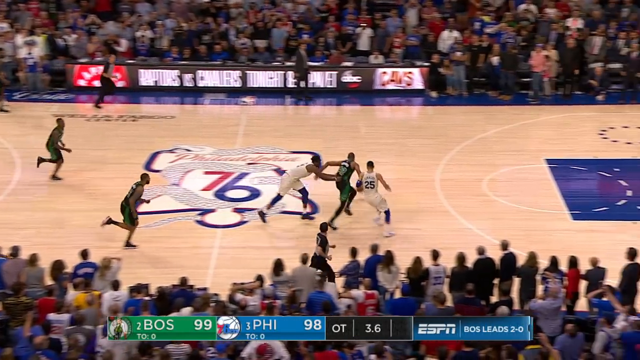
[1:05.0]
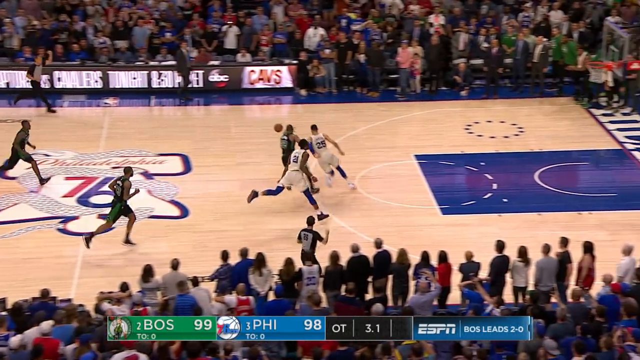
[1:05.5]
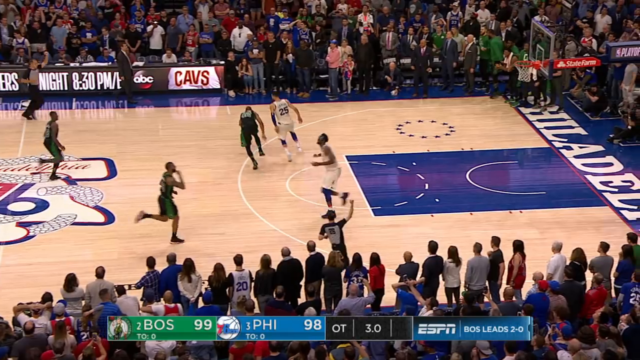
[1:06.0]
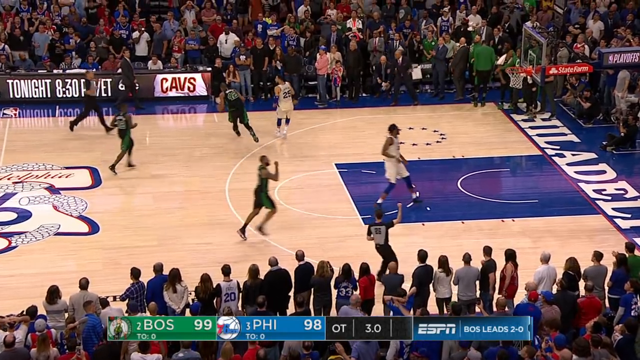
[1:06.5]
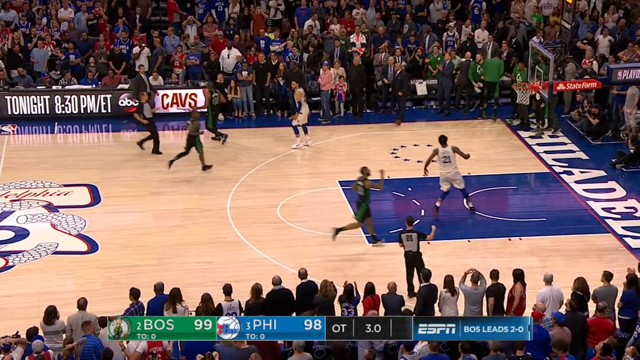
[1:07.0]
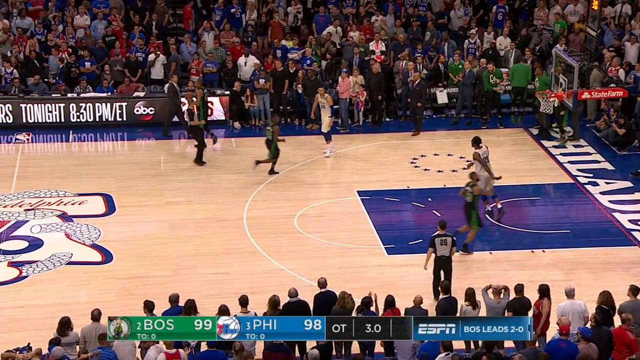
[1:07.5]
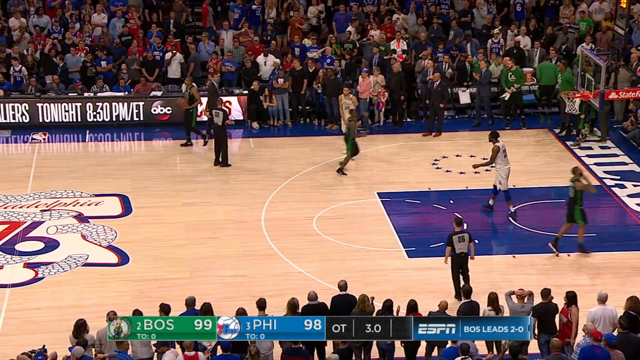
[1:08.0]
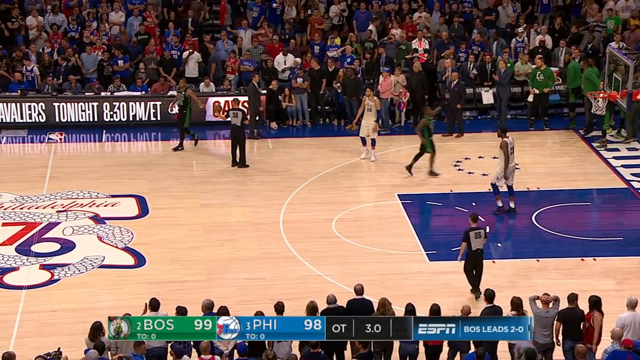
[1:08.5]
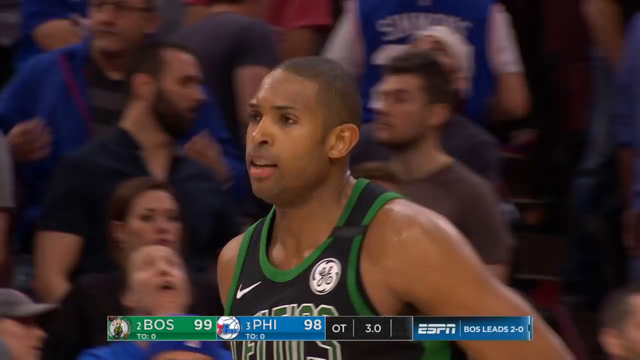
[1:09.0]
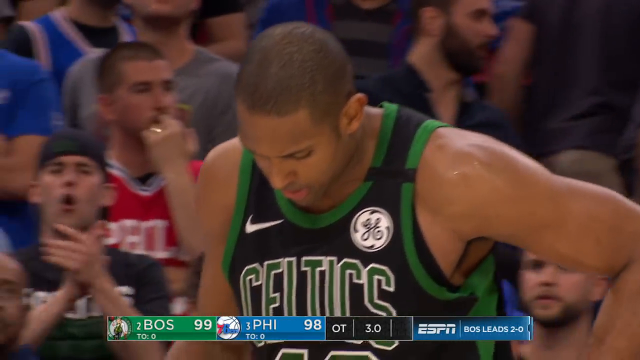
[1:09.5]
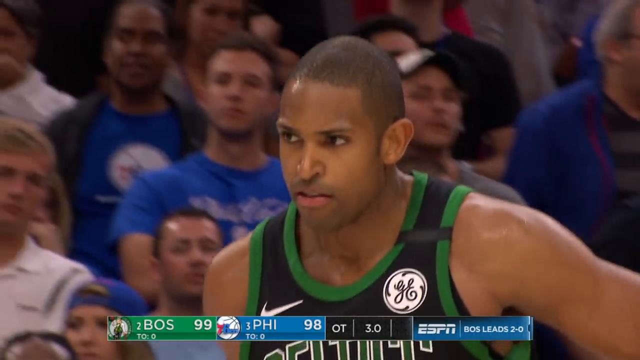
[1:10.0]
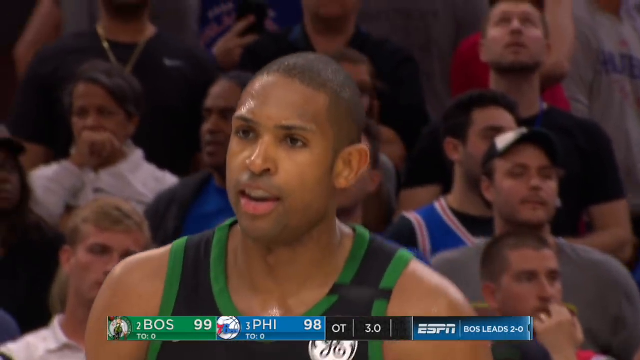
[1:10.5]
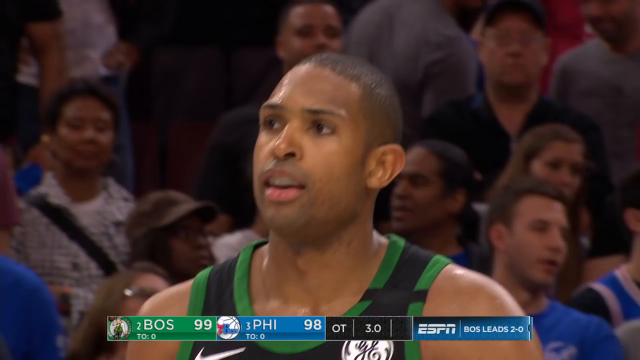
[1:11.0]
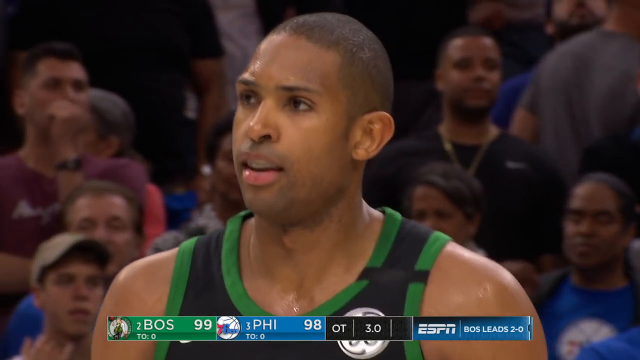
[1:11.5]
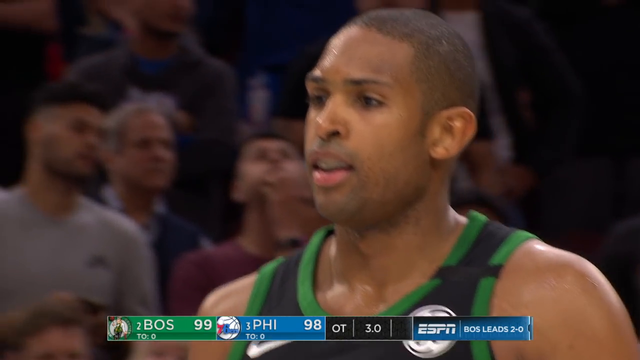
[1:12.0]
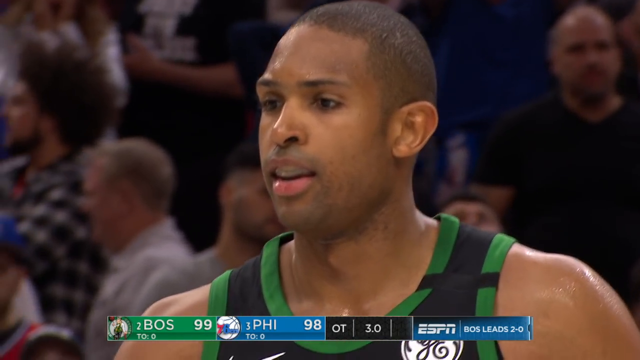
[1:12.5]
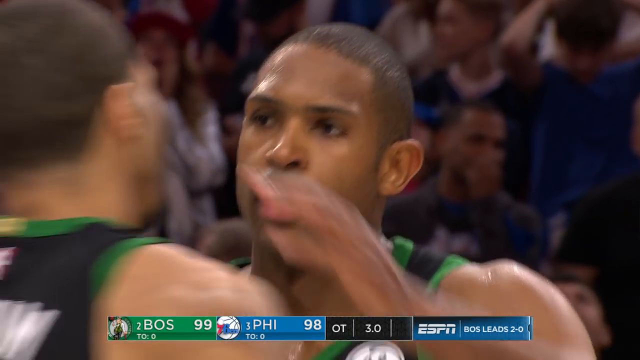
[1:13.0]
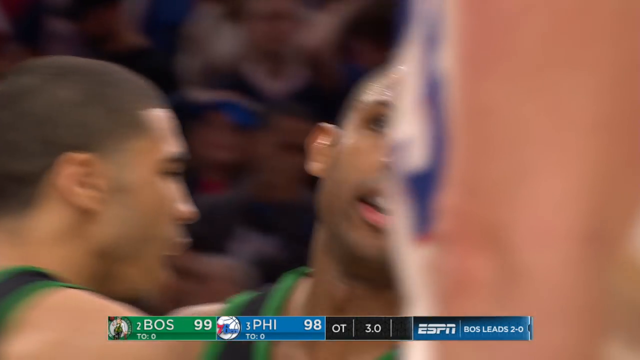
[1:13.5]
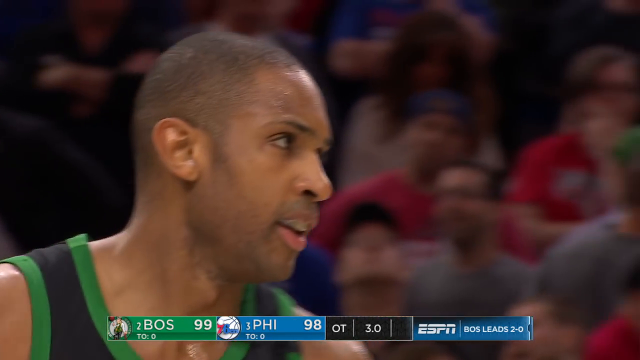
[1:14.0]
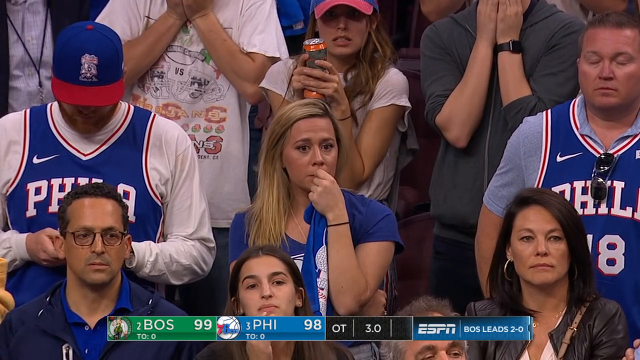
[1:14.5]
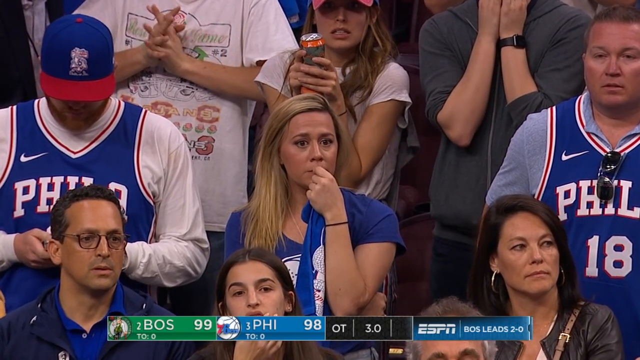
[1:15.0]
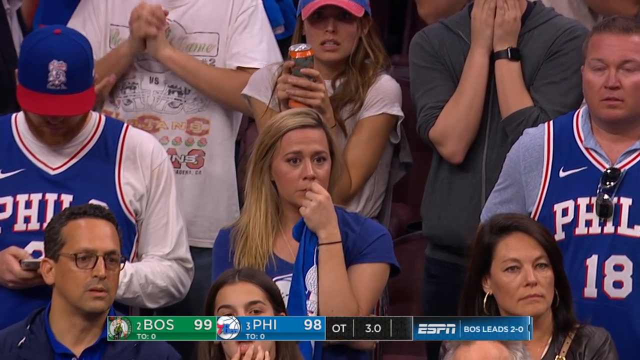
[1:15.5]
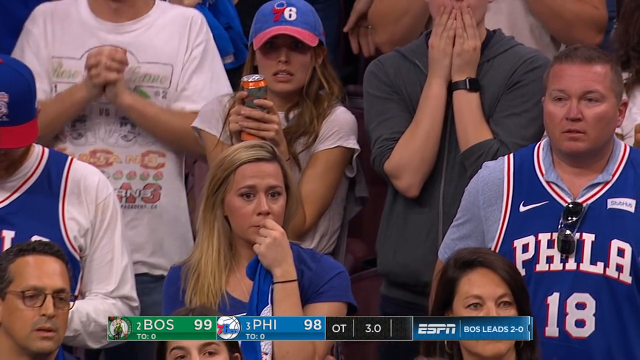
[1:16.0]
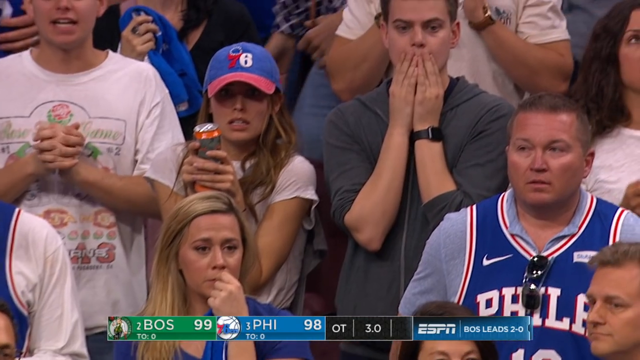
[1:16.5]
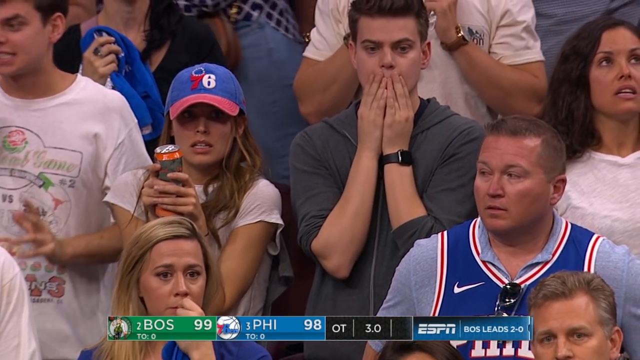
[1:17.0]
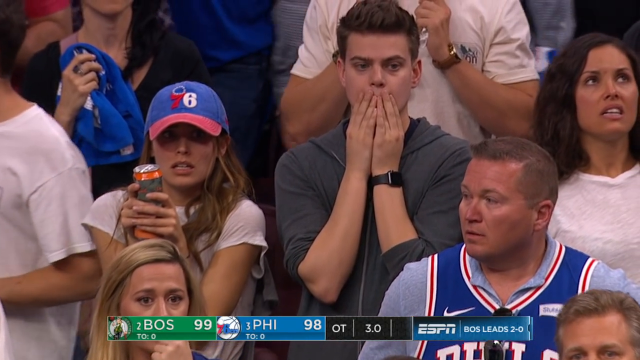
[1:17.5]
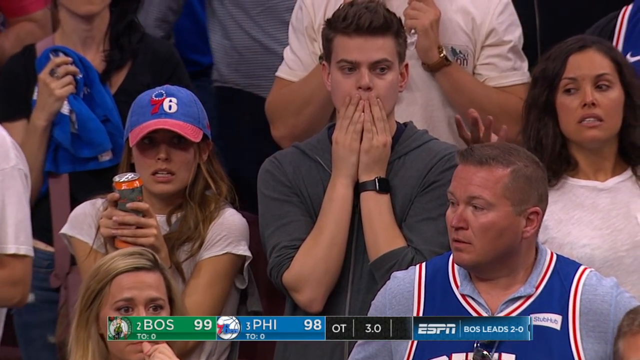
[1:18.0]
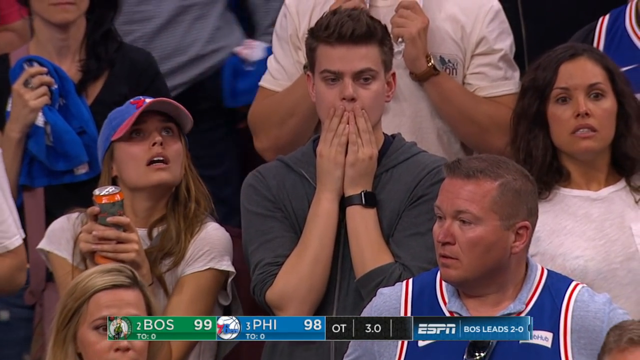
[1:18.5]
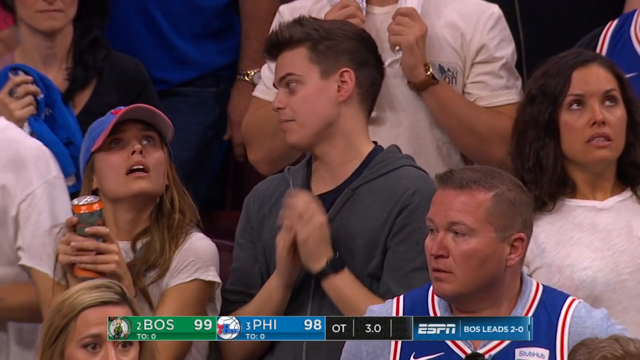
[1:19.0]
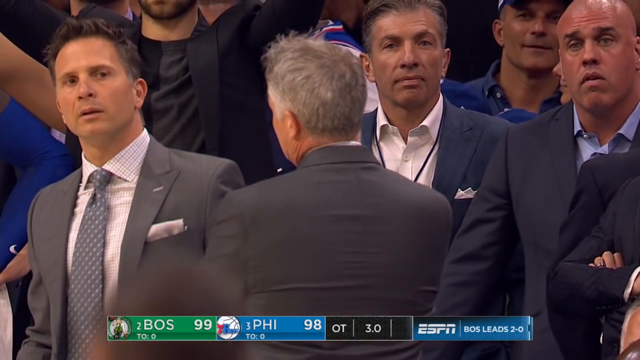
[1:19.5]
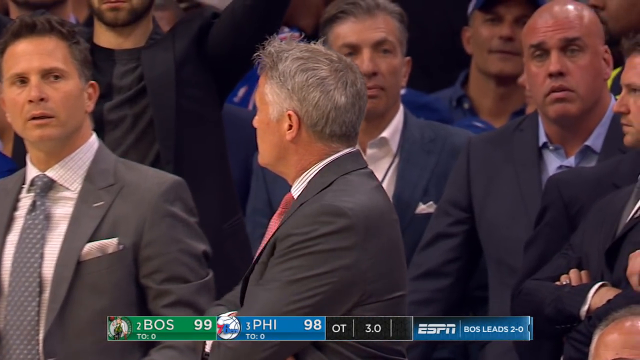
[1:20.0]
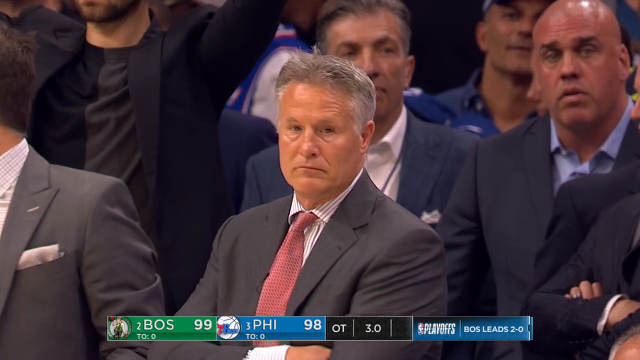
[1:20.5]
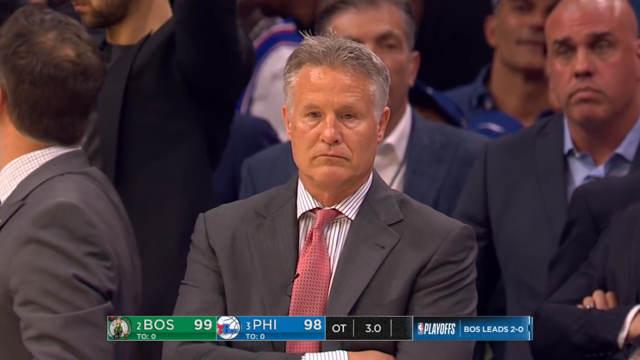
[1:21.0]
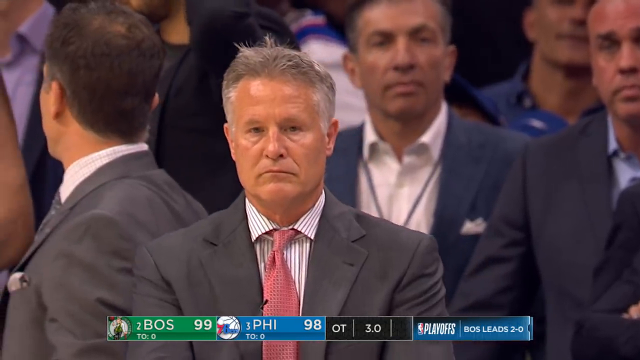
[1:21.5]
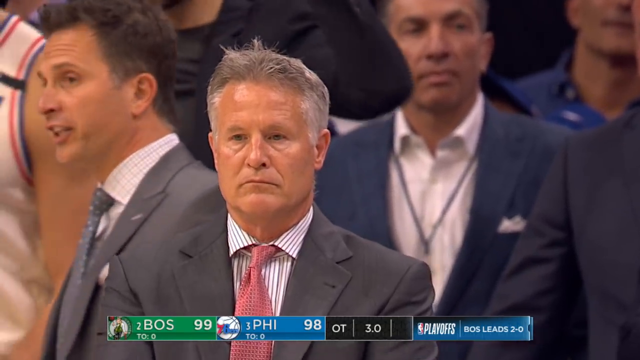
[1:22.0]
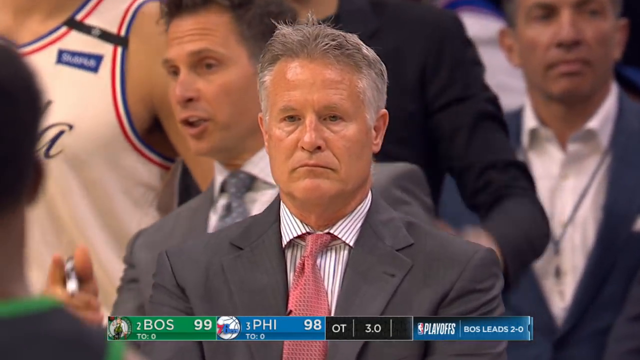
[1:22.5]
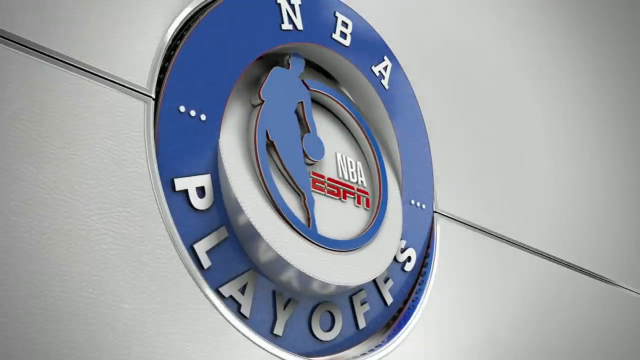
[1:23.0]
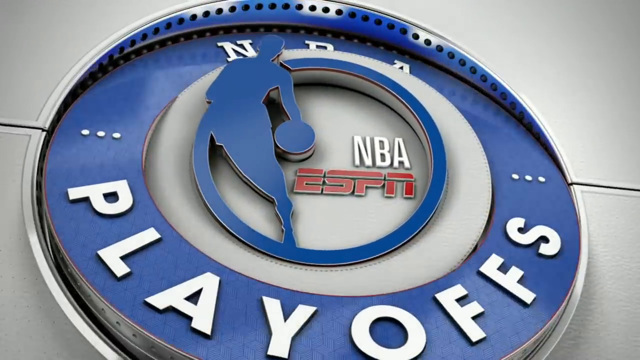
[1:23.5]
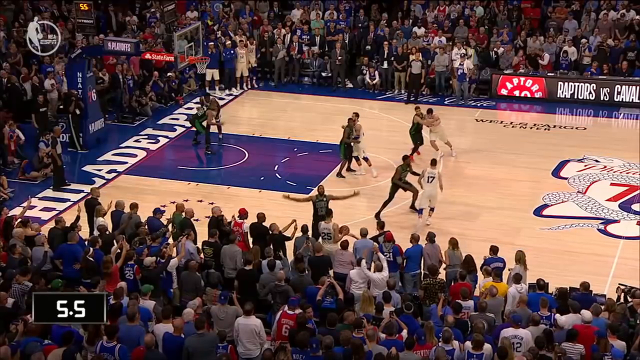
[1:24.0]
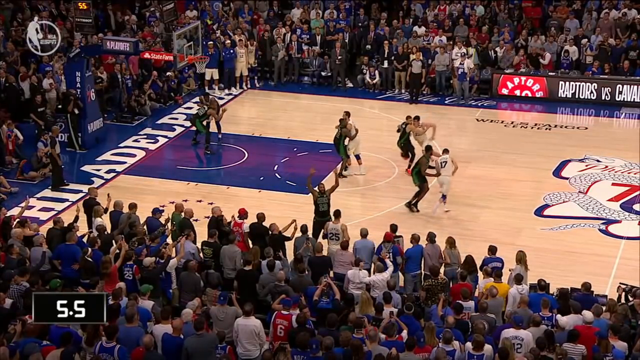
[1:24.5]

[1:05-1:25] Everyone appears to be on the right side of the court. A player falls back and loses control of the ball; a 76ers player next to the Celtics player dribbling the ball is veering back and up, and it is unclear whether a foul was called. The camera zooms in on the player who was holding the ball, who shakes his head in an affirmative way. The crowd is shown looking concerned: a man has both hands over his mouth, a blonde woman with a concerned look has her hand over her lips, and another woman to the left of the man covering his mouth holds an orange drink very close to her face, almost clenching it. Next, what looks like a coach for one of the teams appears, wearing a red tie and a black suit, with a very concerned look on his face.